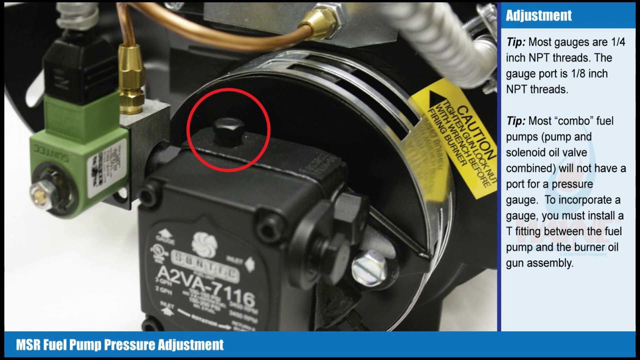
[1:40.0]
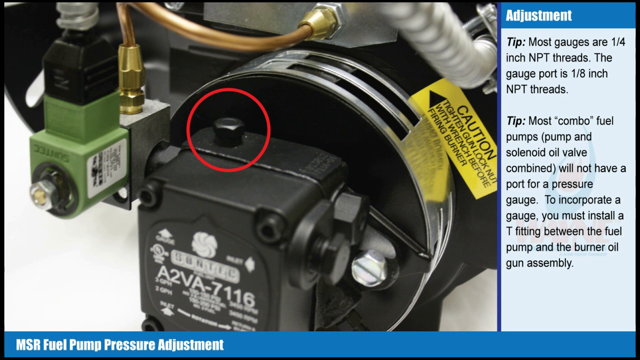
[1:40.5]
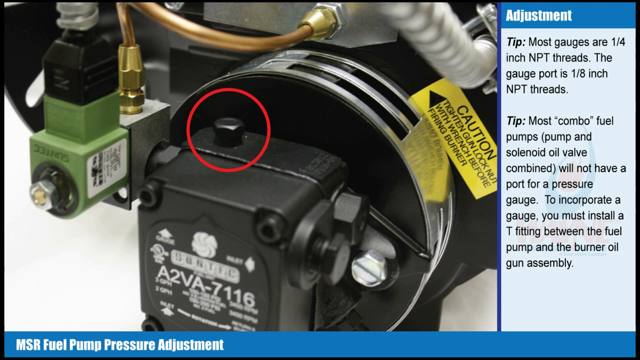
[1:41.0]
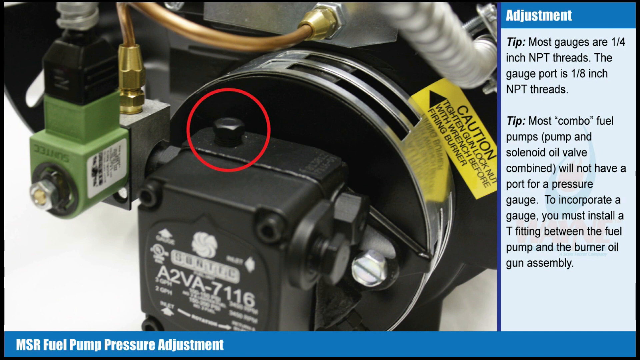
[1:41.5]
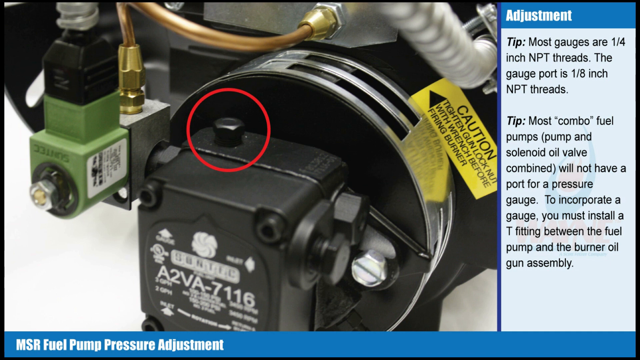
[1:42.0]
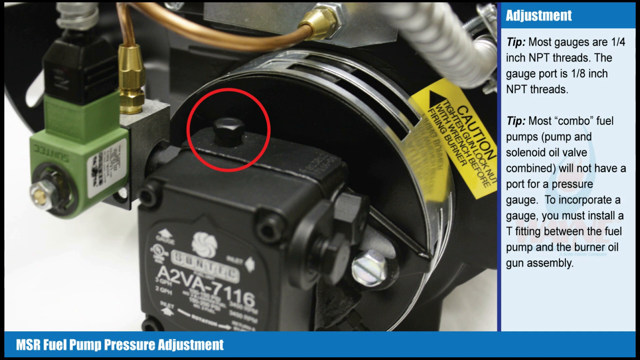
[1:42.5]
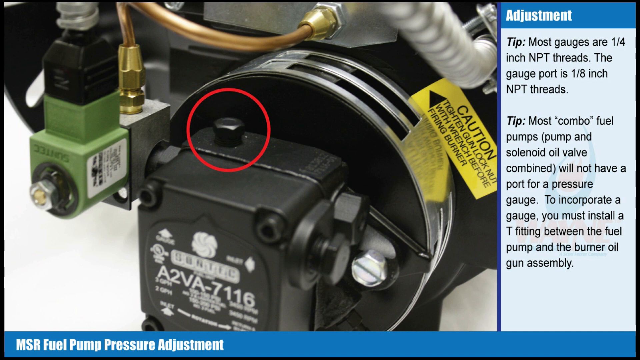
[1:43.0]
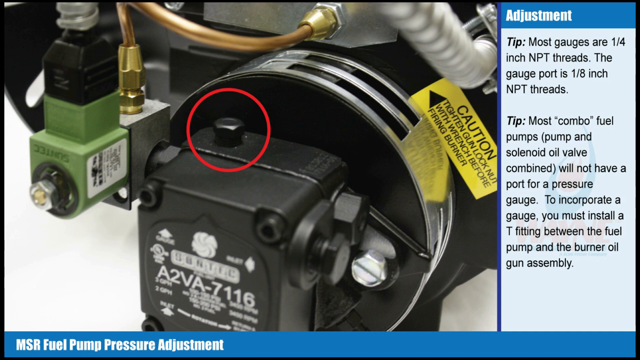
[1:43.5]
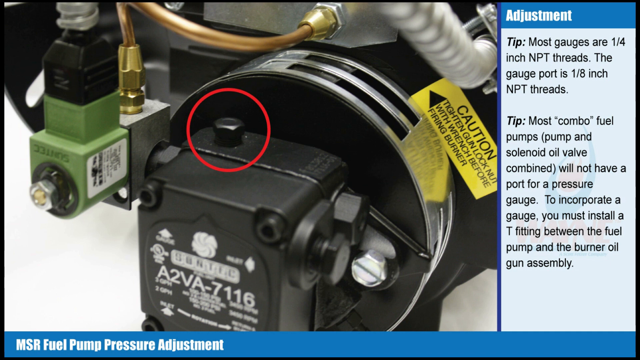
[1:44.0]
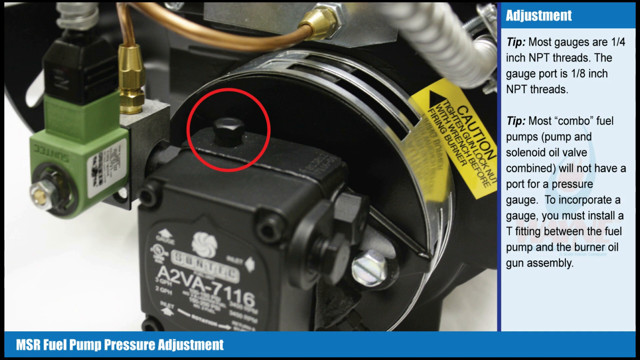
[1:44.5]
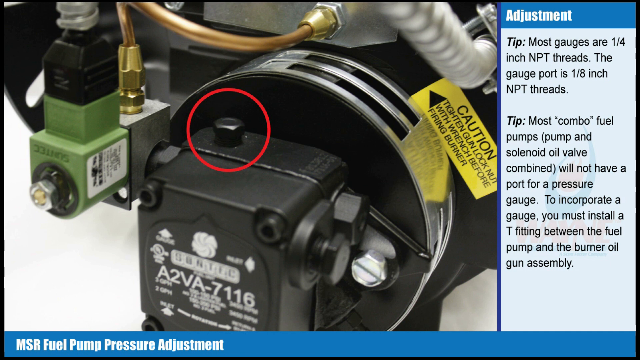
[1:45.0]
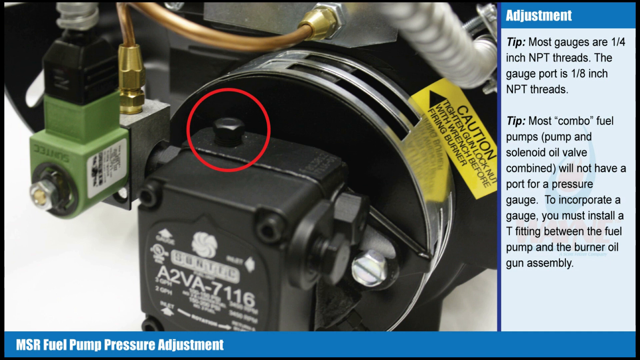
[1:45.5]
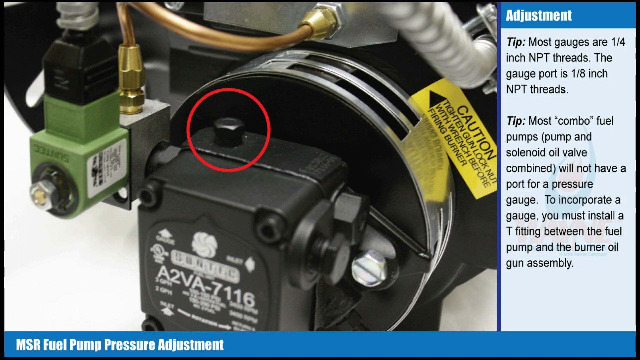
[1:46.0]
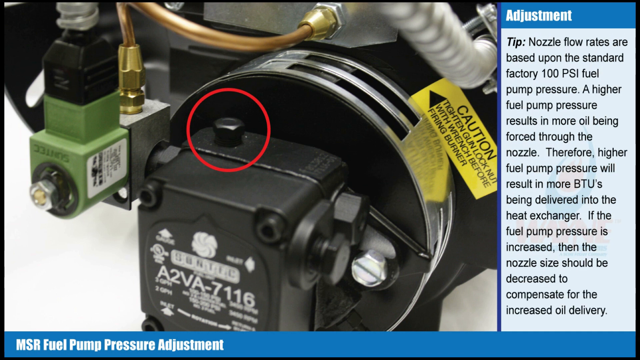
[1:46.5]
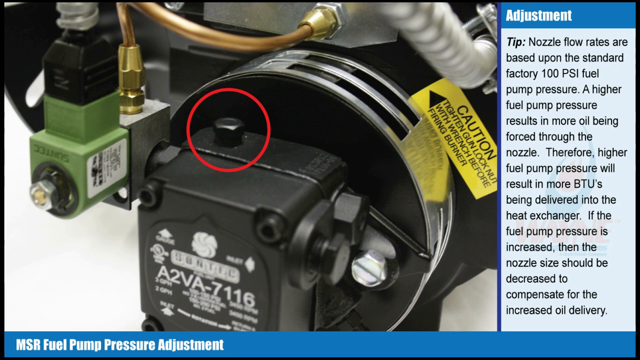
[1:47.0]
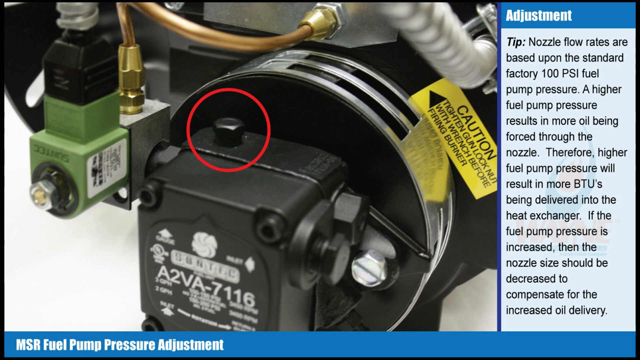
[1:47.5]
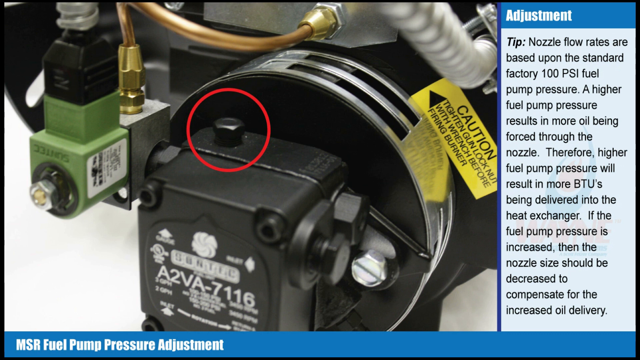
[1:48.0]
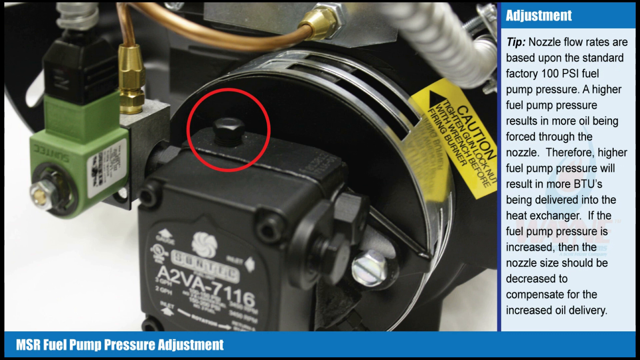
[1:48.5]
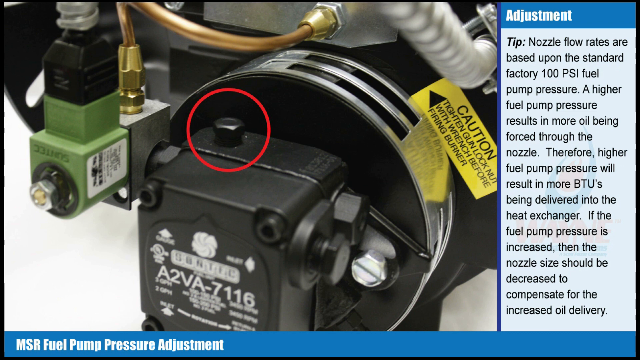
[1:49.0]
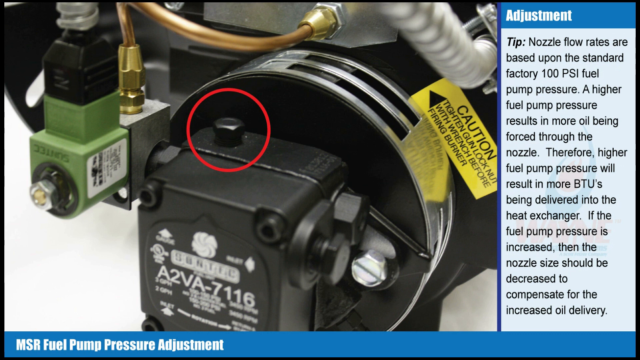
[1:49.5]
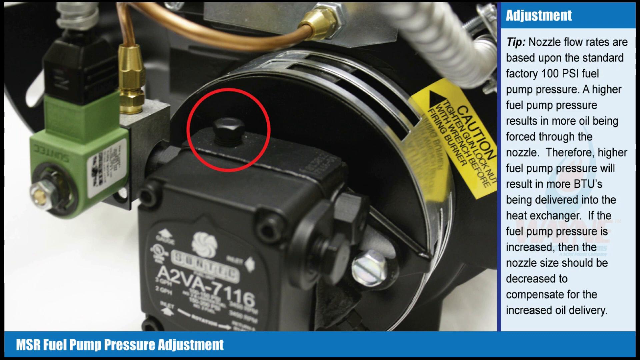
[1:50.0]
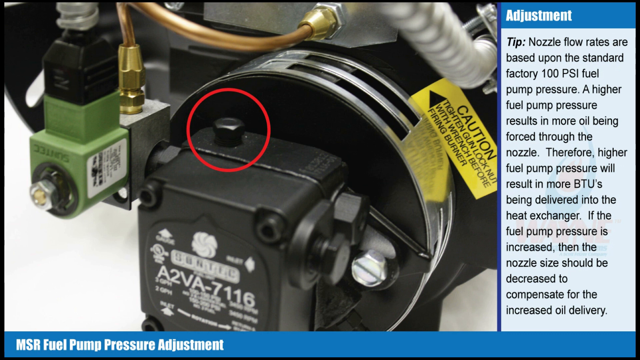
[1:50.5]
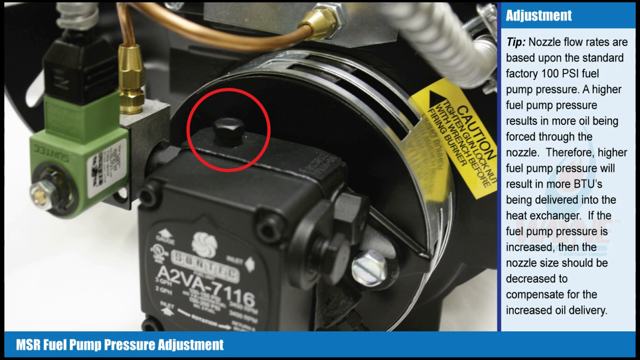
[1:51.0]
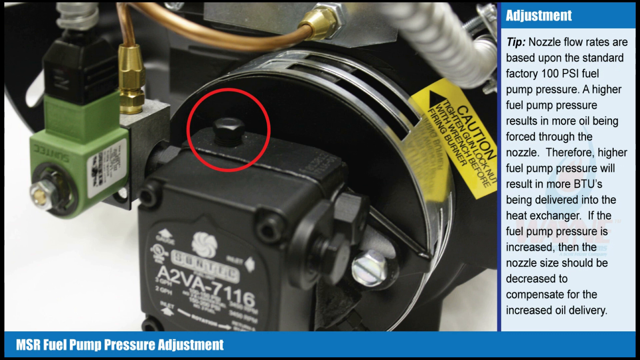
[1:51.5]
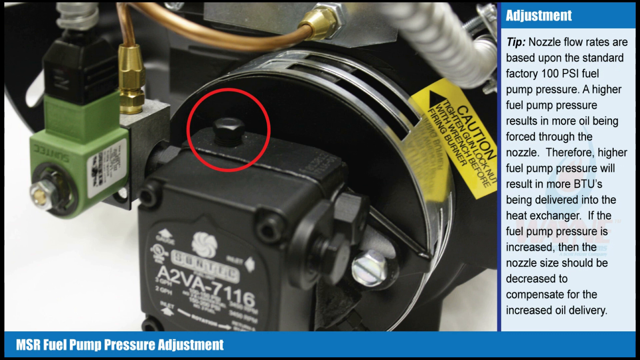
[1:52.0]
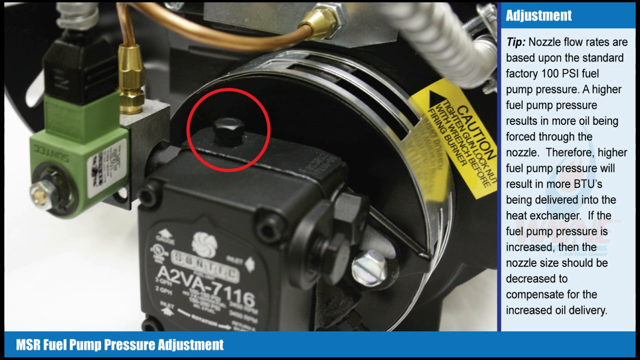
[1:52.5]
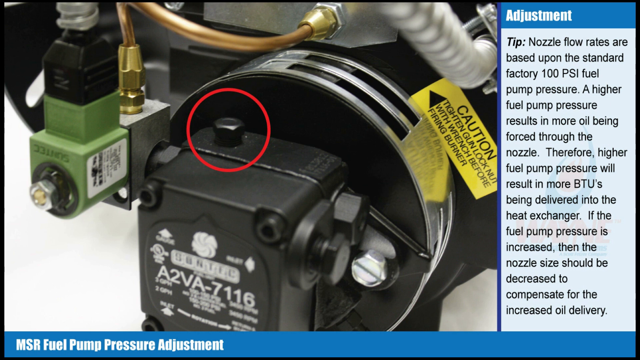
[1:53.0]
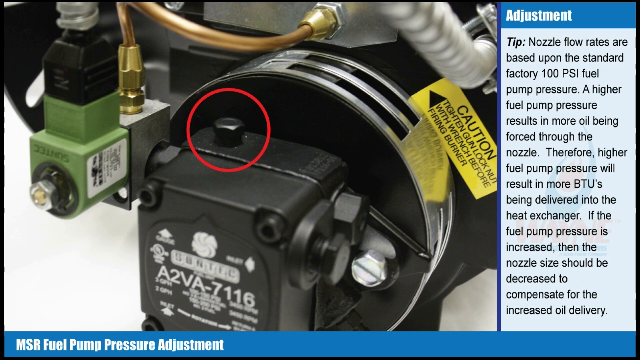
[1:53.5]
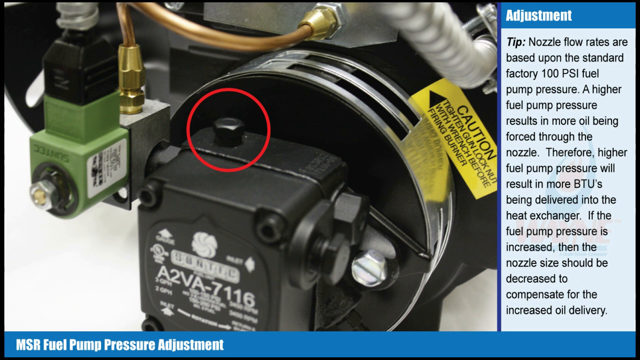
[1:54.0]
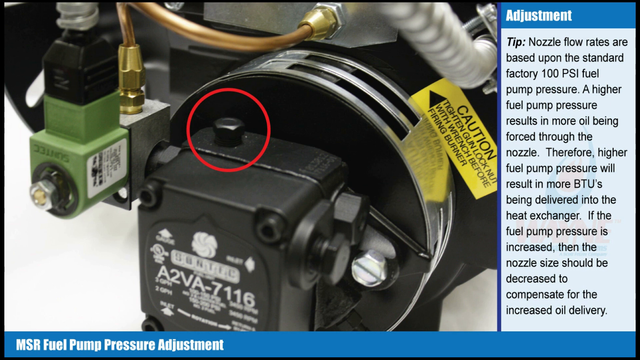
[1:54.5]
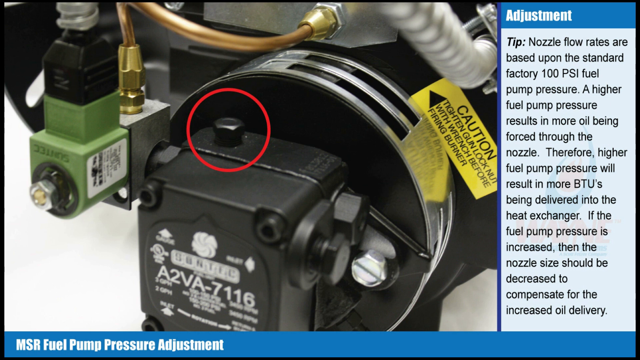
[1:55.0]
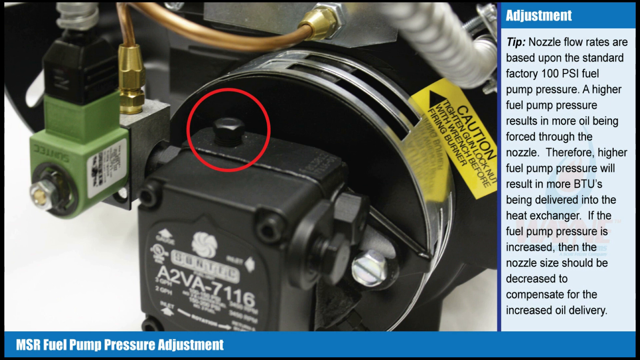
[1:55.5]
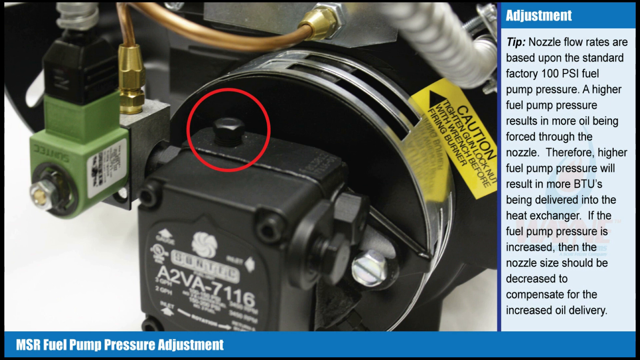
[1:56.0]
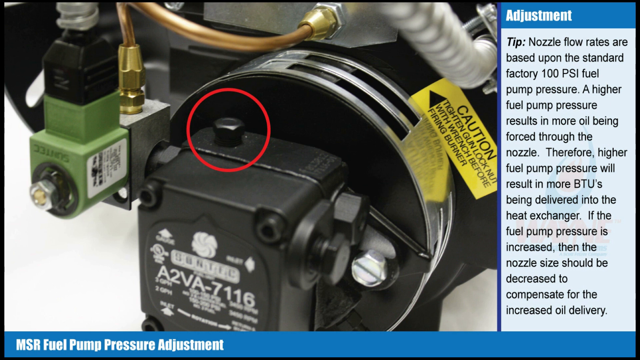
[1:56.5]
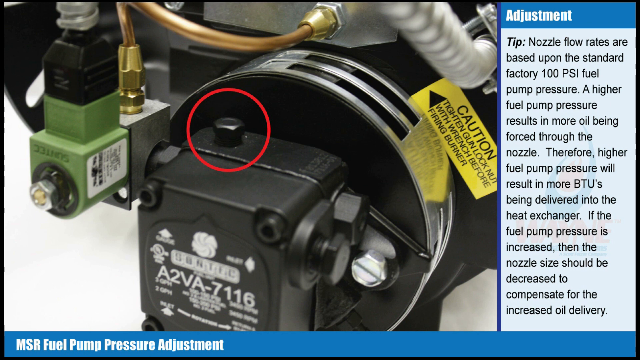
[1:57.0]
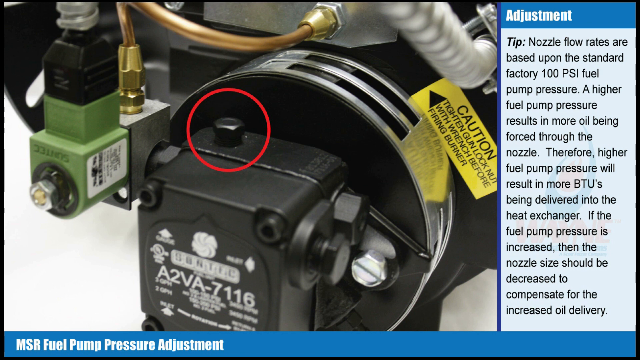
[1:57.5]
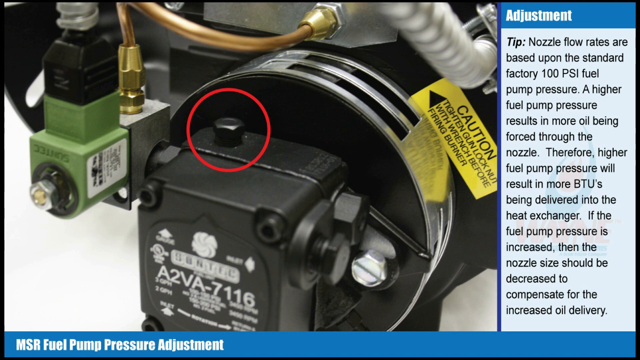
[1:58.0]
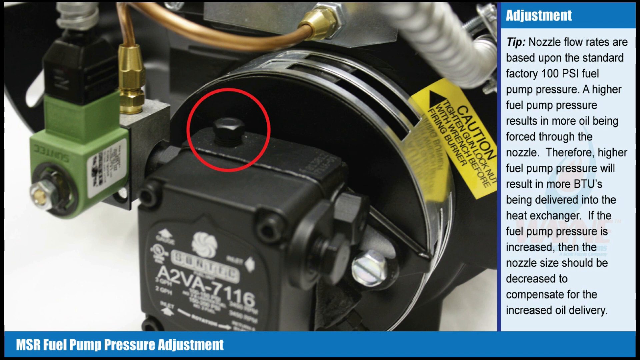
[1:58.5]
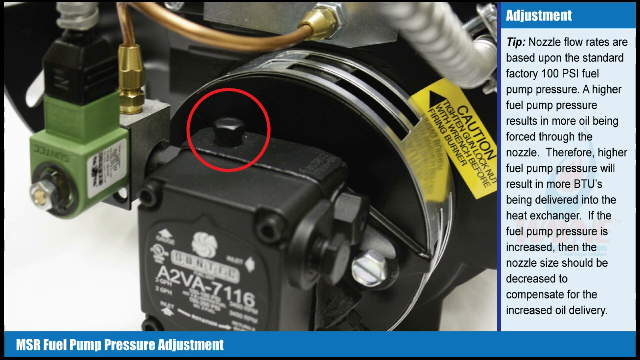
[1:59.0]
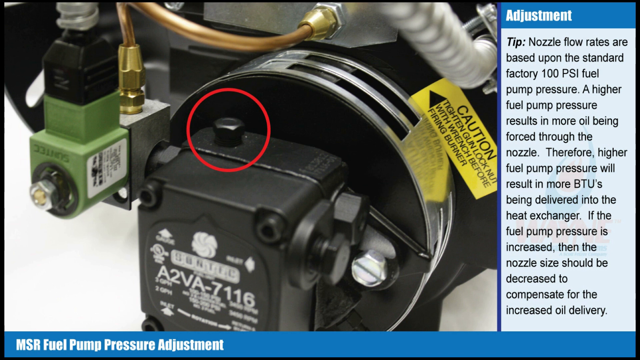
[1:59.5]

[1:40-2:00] The front view of the fuel pump is shown with the gauge at the top circled in red, staying on screen for about six seconds. Then the text on the right changes, showing "tip" in bold black font, and reads "nozzle flow rates are based upon the standard factory 100 PSI fuel pump pressure. A higher fuel pump pressure results in more oil being forced through the nozzle. Therefore, higher fuel pump pressure will result in more BTUs being delivered into the heat exchanger. If the fuel pump pressure is increased, then the nozzle size should be decreased to compensate for the increased oil delivery." At the bottom of the screen, a blue banner with white text reads "MSR Fuel Pump Pressure Adjustment." The front view of the pump and this new tip stay on screen for the remainder of the shot.